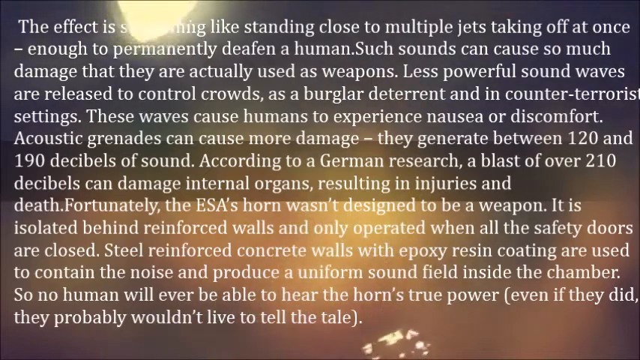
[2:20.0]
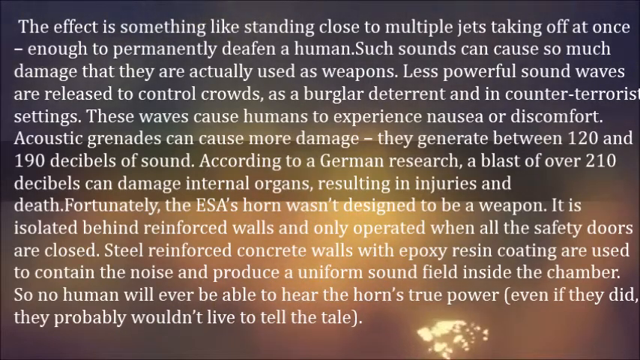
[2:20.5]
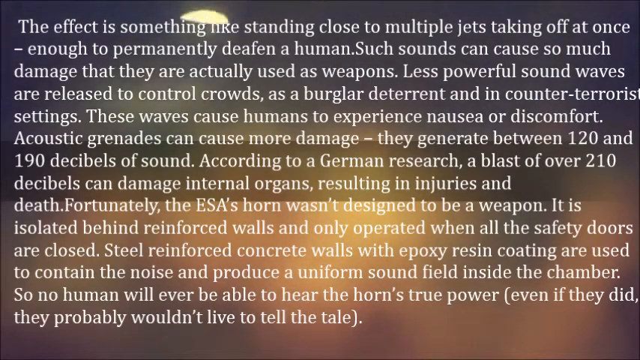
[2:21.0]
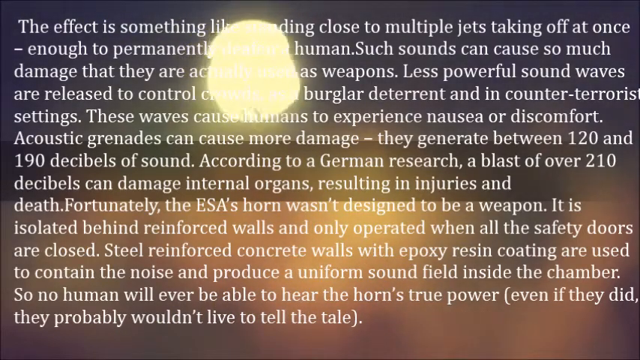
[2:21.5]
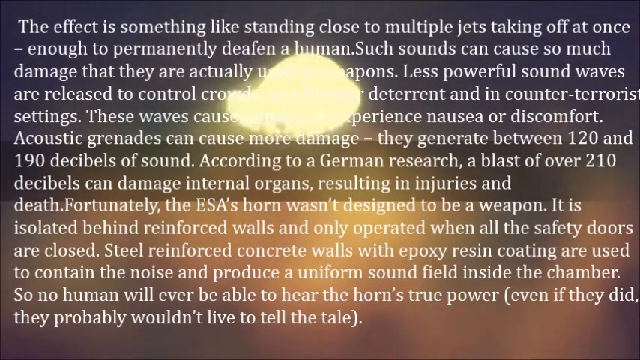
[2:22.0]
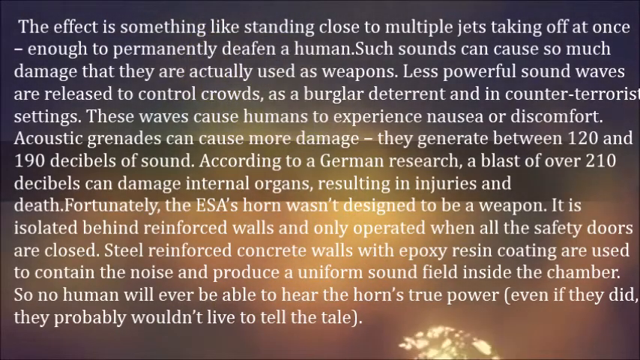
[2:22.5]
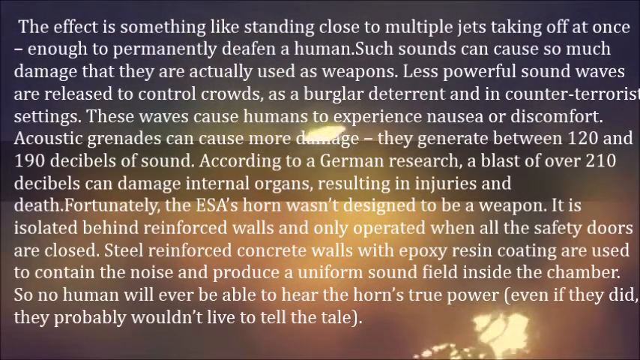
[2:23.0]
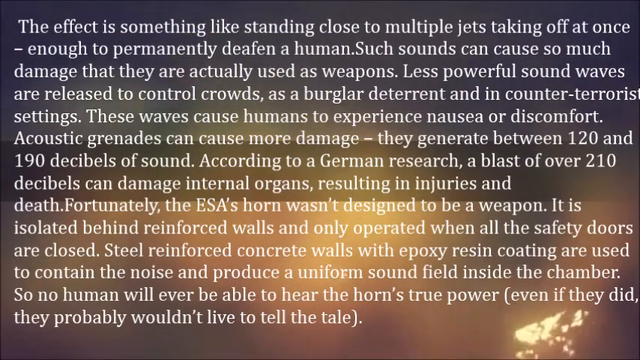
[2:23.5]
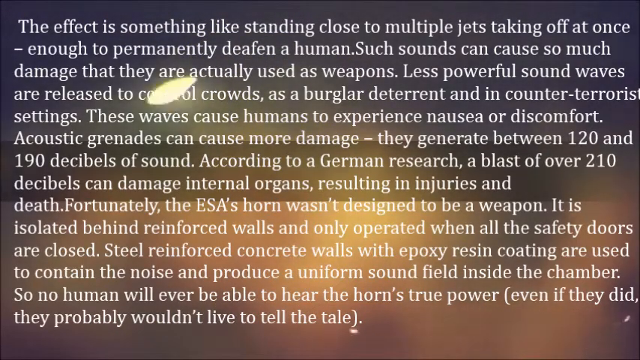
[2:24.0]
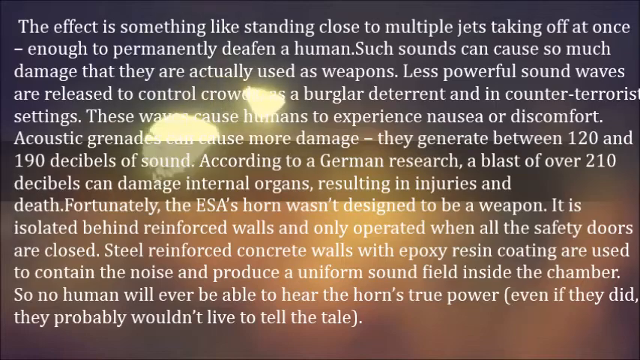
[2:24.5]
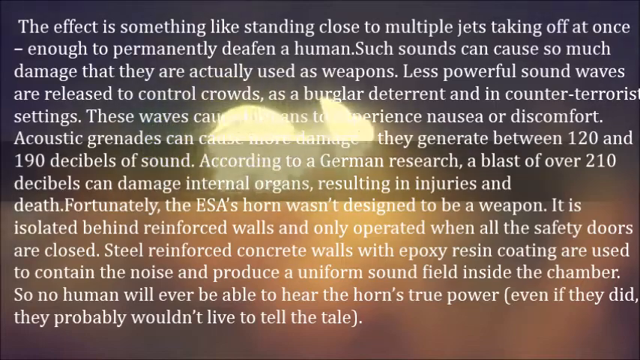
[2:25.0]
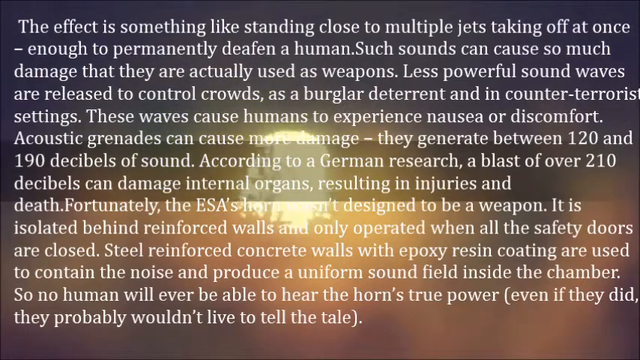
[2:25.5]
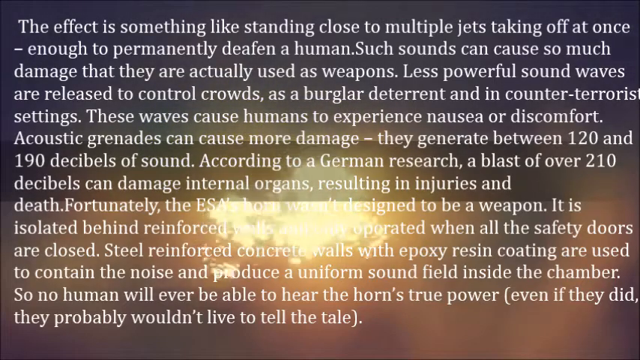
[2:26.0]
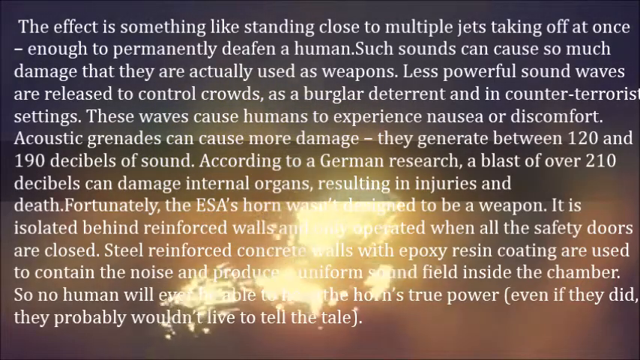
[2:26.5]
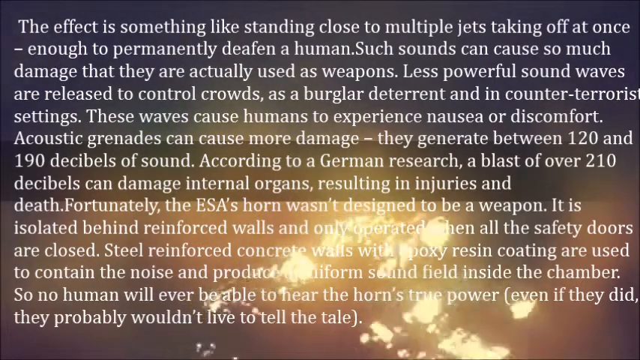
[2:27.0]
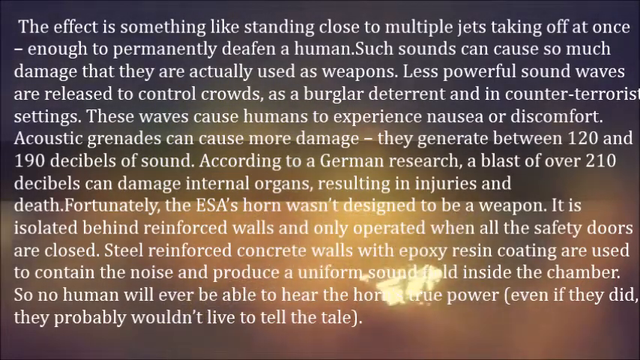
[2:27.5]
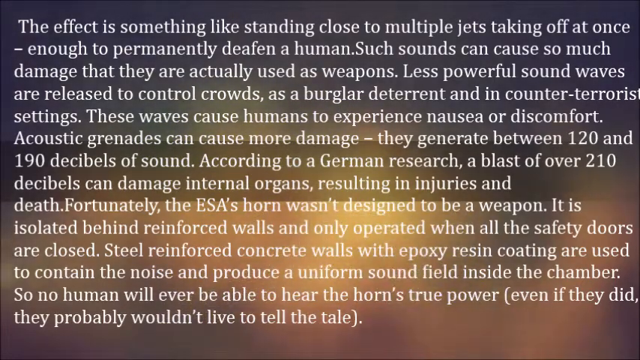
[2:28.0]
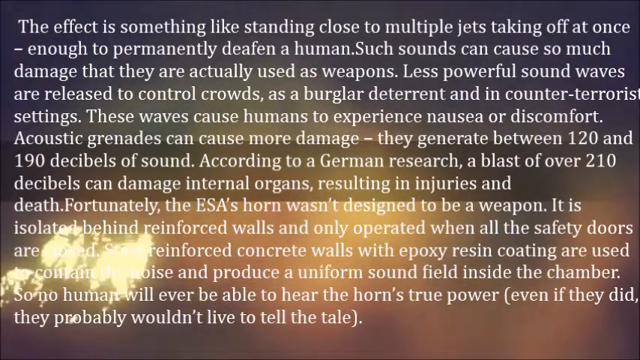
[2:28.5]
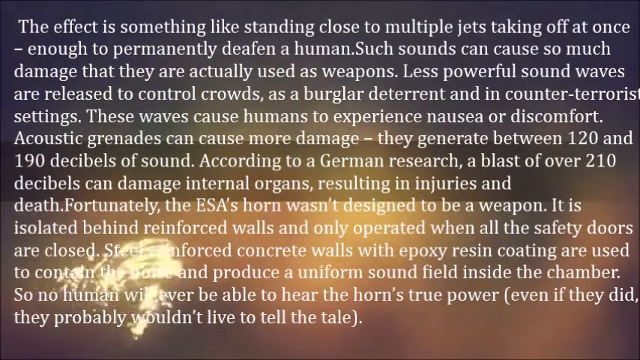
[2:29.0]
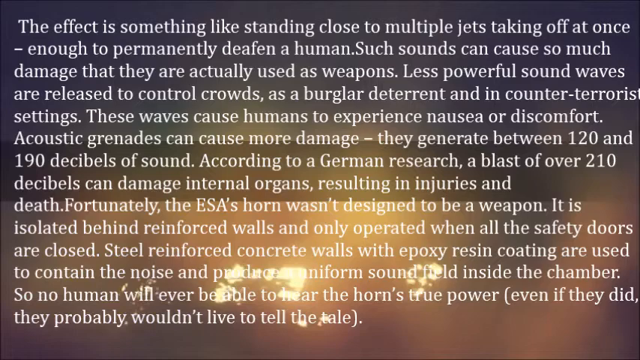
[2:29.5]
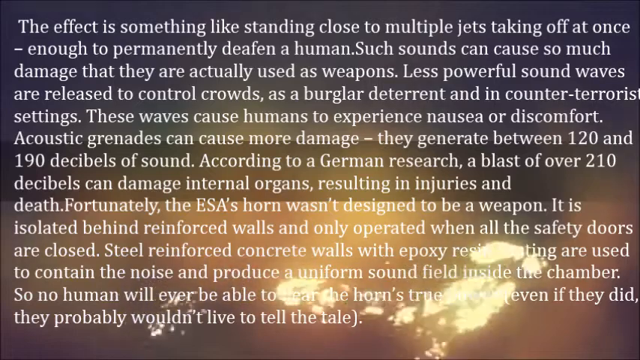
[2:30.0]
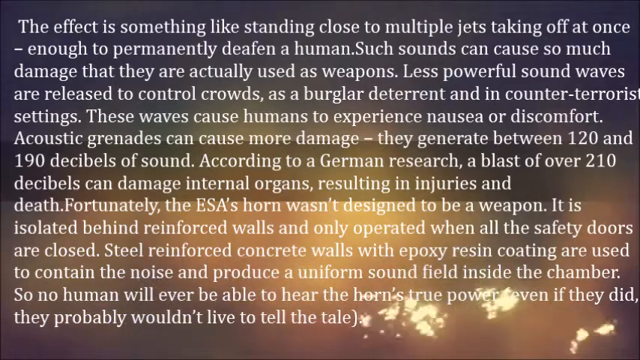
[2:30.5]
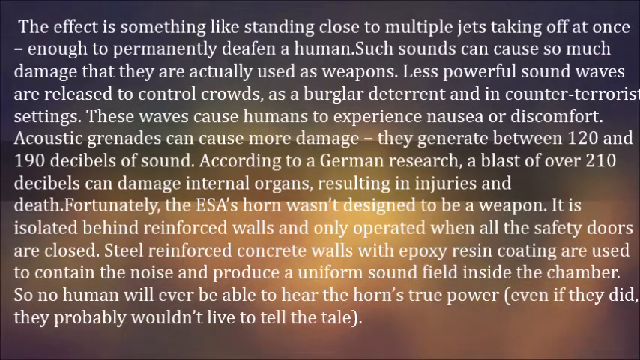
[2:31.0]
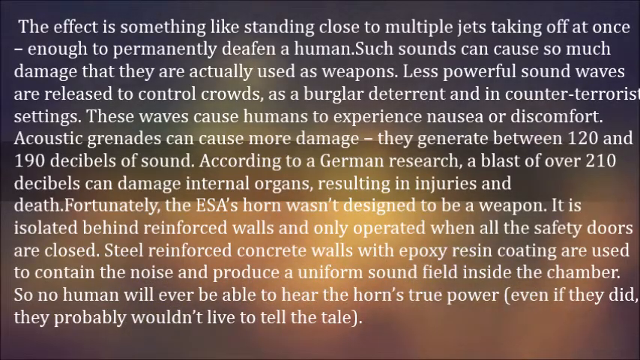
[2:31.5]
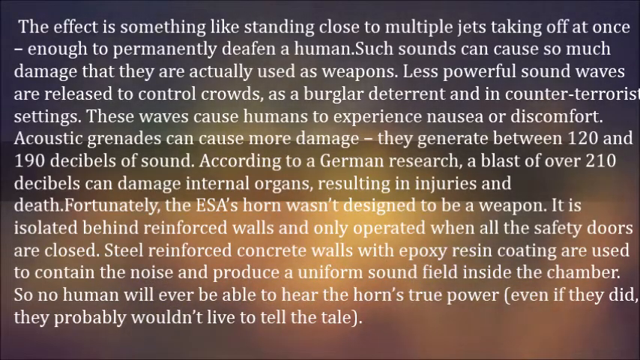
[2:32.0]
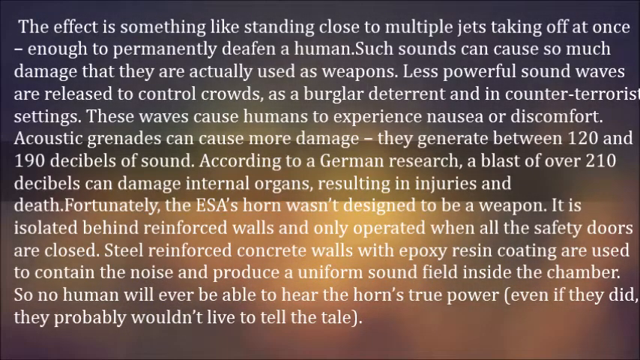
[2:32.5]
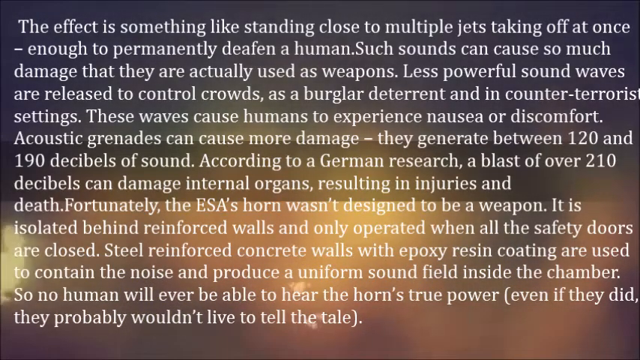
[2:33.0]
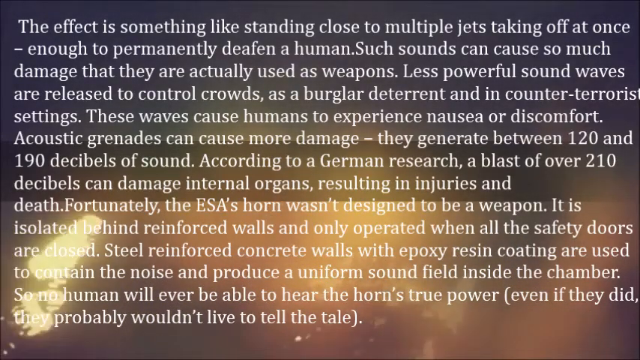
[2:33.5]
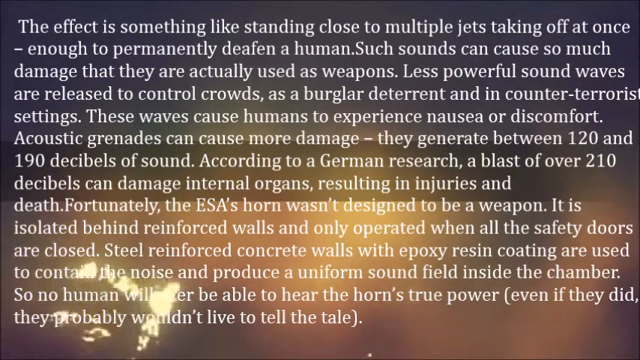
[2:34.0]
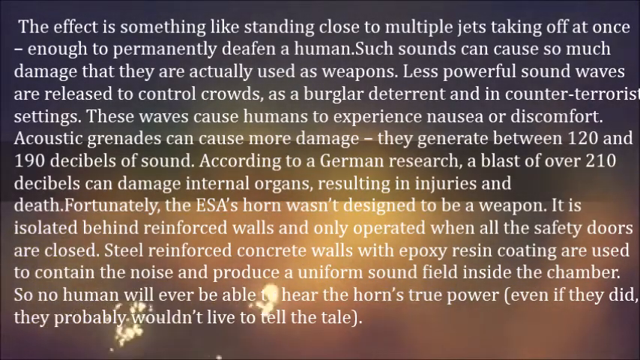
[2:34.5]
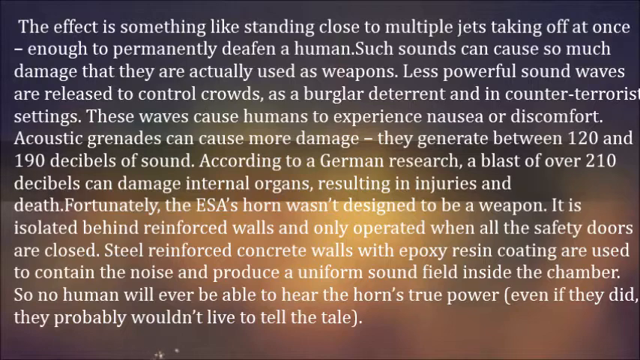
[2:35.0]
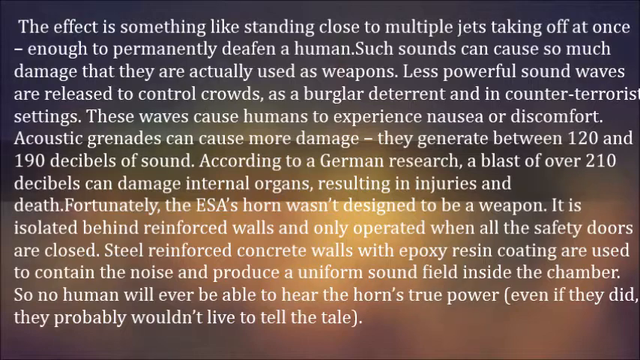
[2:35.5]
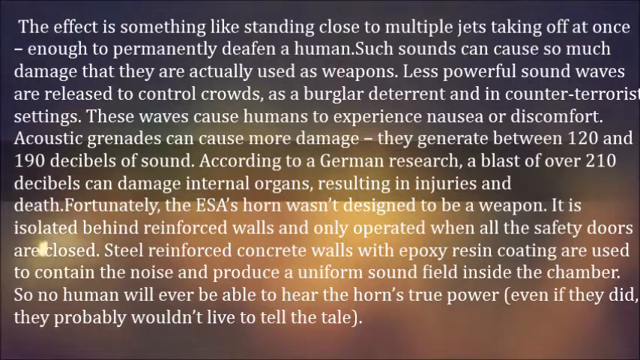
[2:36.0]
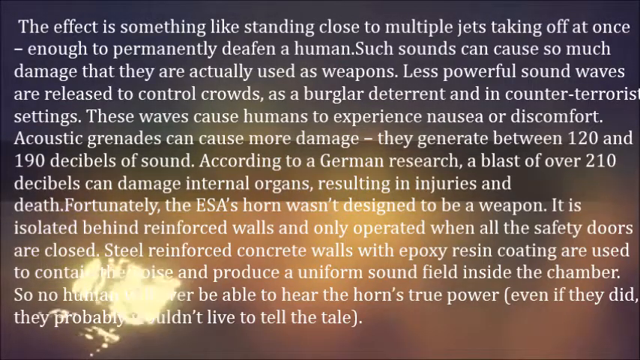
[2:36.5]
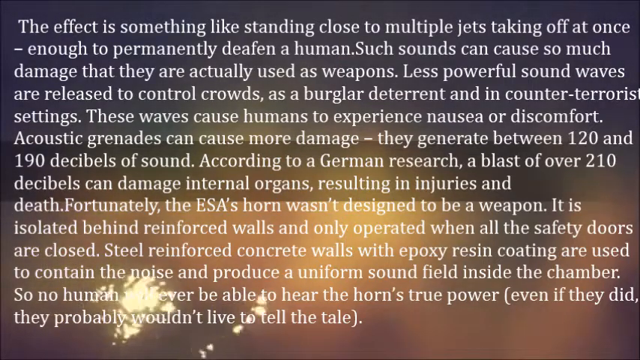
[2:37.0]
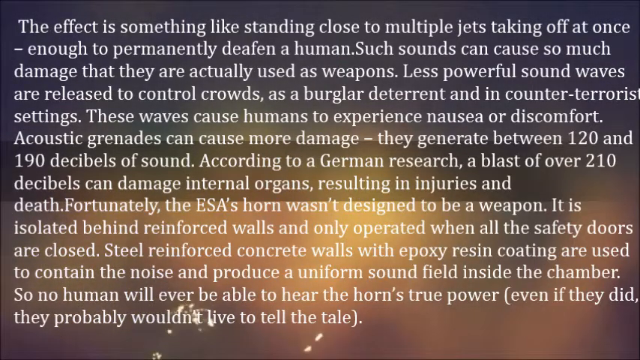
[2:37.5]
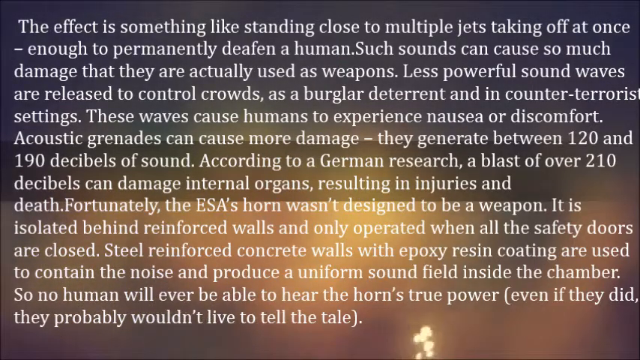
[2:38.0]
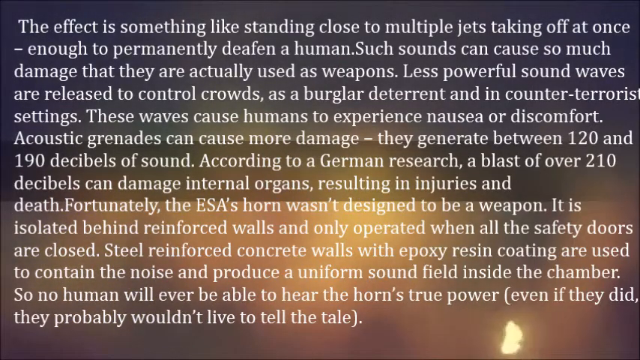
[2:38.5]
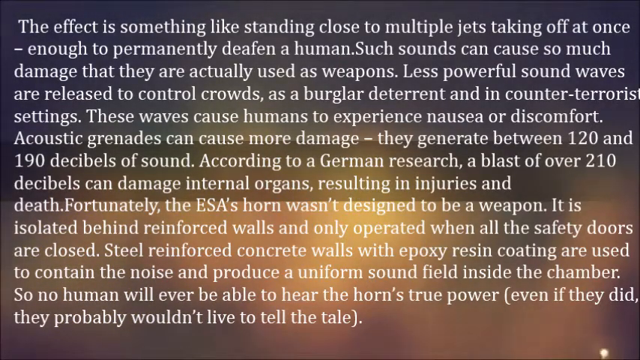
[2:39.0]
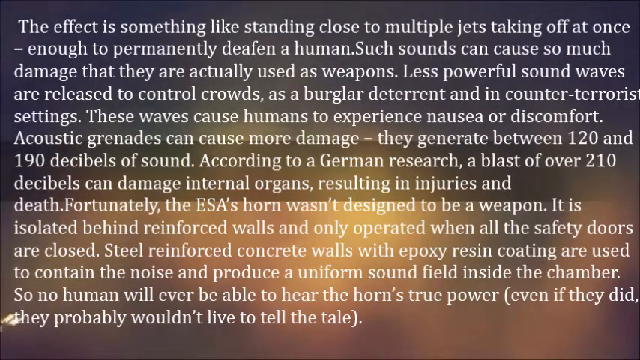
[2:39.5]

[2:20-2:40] The same paragraph continues to be shown, stating that no one will ever be able to hear the horn's true power.